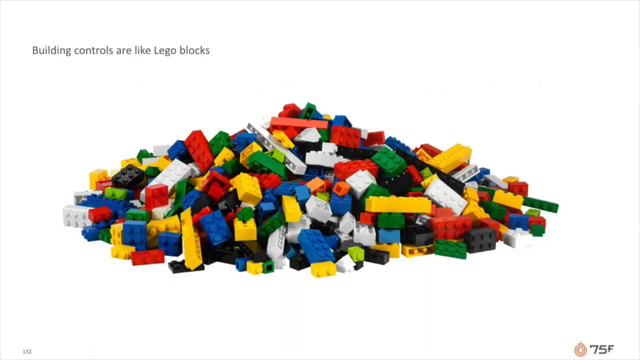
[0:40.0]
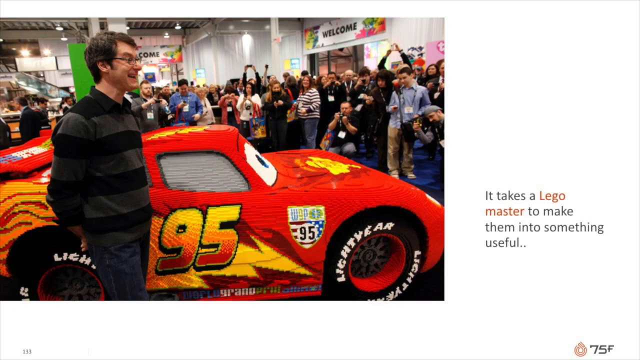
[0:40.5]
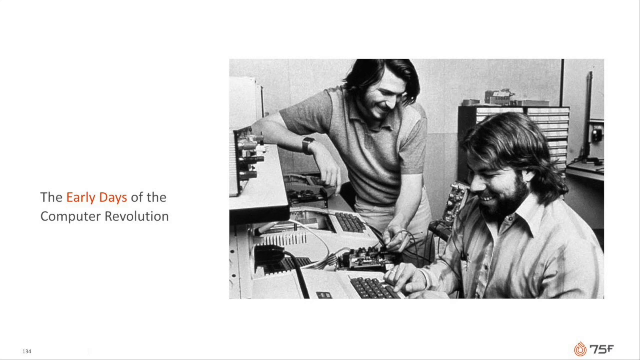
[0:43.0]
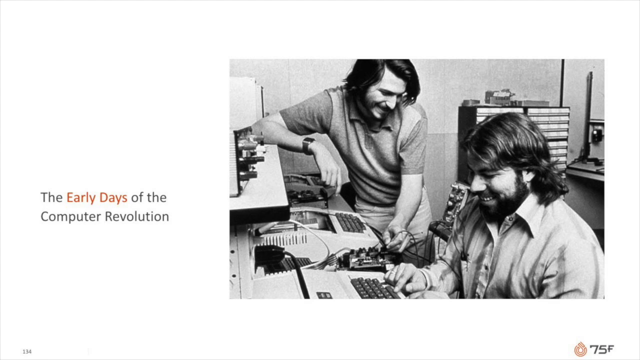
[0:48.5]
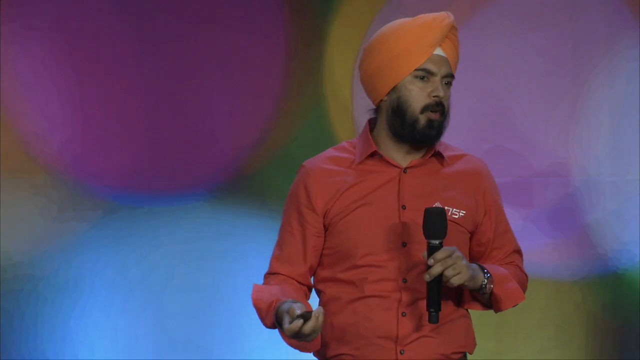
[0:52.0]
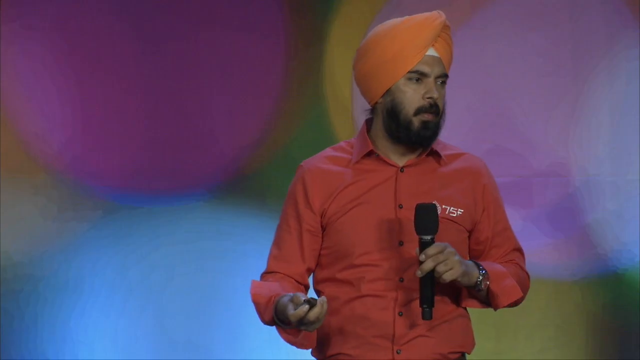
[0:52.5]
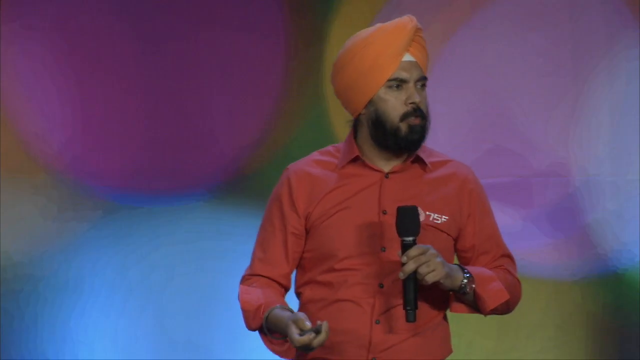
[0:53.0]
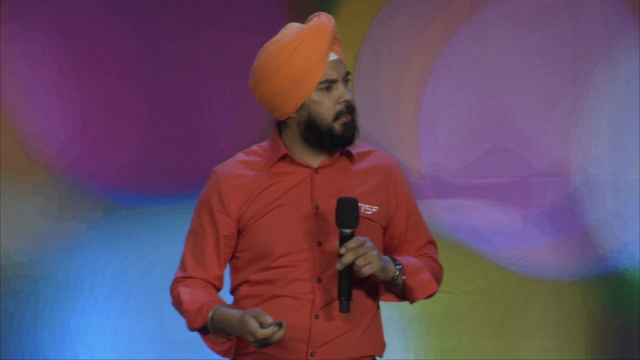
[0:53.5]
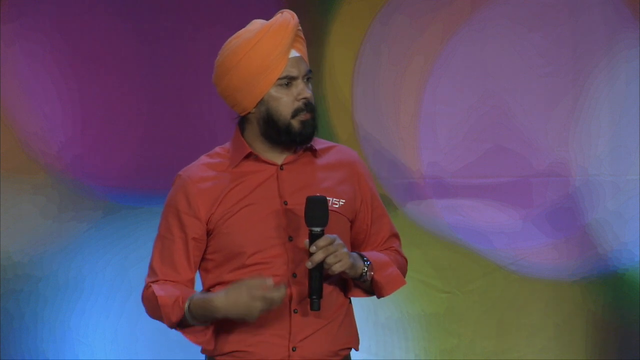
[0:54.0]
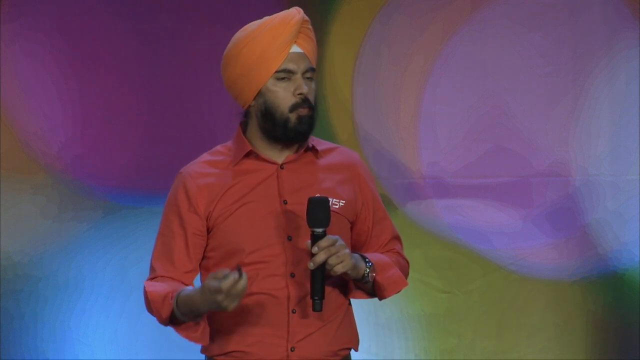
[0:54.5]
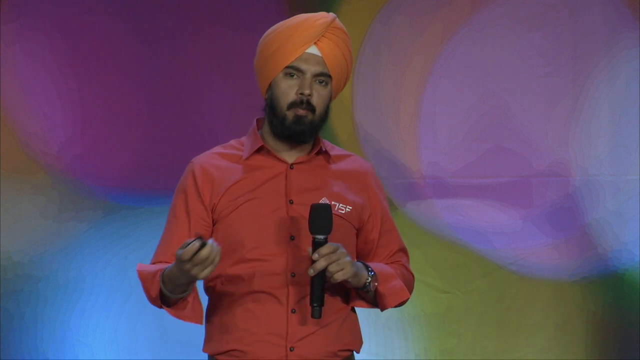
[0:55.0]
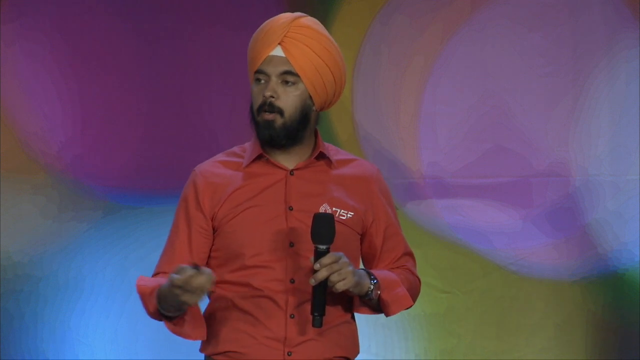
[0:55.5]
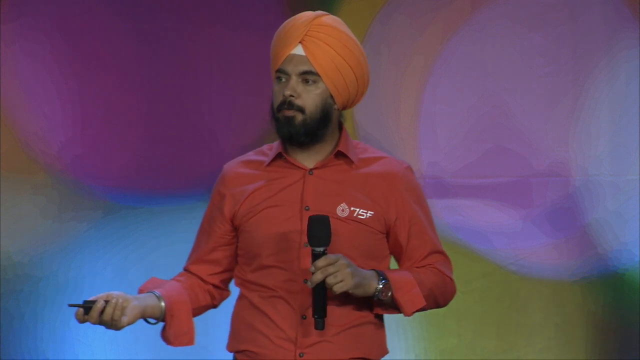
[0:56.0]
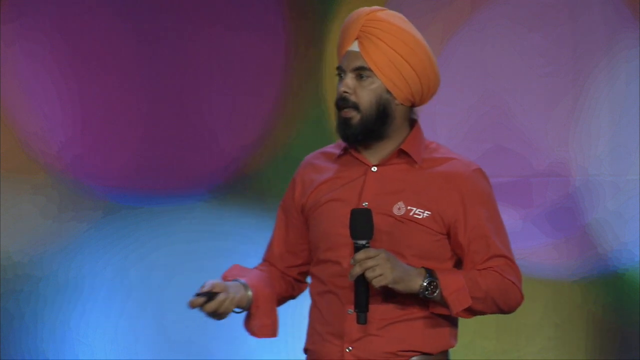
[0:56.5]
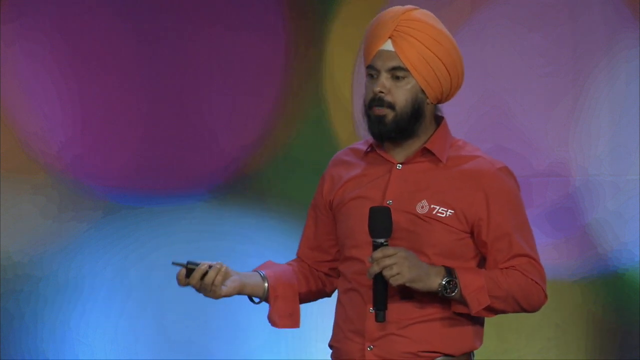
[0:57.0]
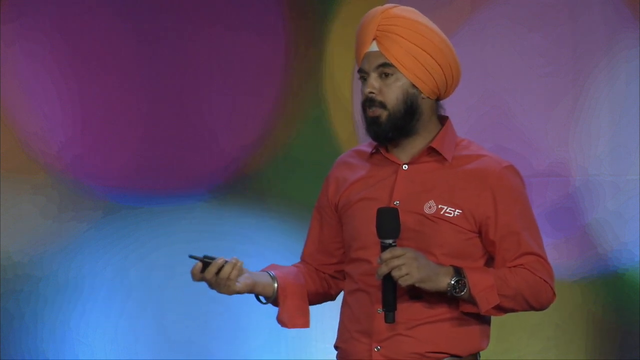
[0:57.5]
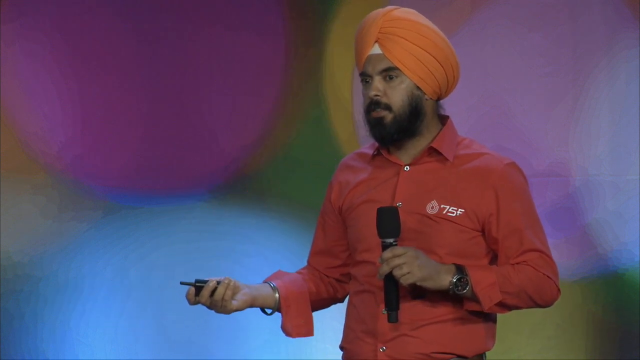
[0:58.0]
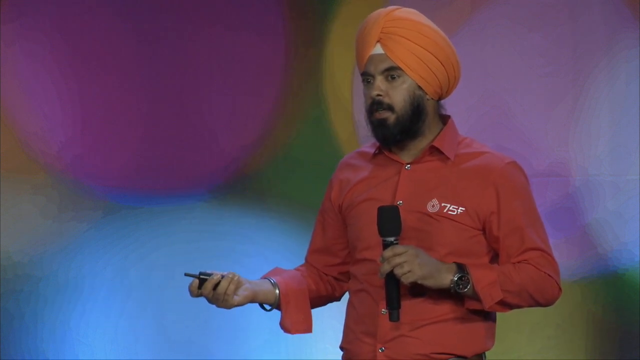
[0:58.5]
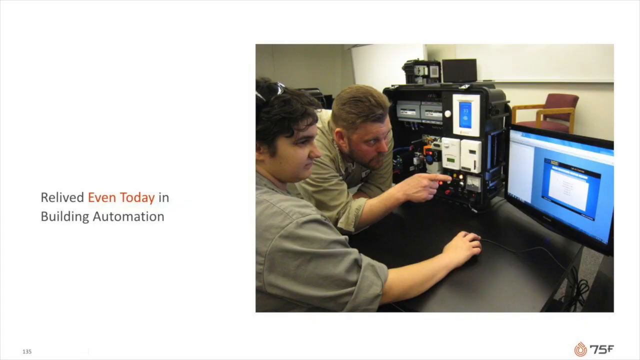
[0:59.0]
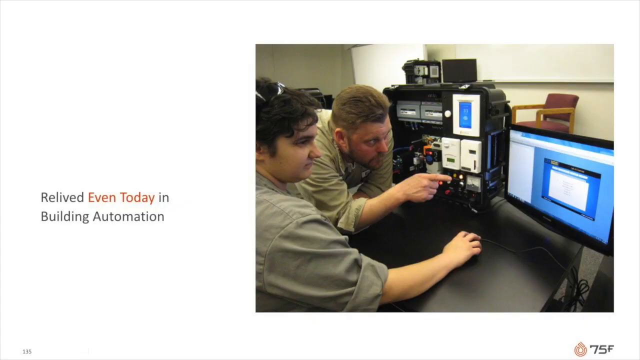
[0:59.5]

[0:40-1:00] An image shows a pile of different coloured Lego blocks on a white background, with text above reading "building controls are like Lego blocks". The screen switches to a car from the film Cars, red with orange flames on its sides and eyes on its windscreen, with text on the right reading "It takes a Lego master to make them into something useful". In front of the car is a man in a grey and black sweater and glasses. Next comes a photograph of Steve Jobs and Steve Wozniak in the 1970s: Wozniak is typing on an Apple II computer while Jobs stands next to him, smiling, above an open Apple II computer case, and text on the screen reads "the early days of the computer revolution". The view returns to the speaker in a red shirt and orange turban, holding a microphone and speaking to the audience.